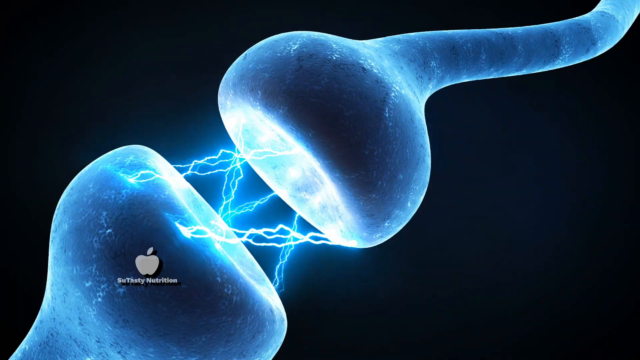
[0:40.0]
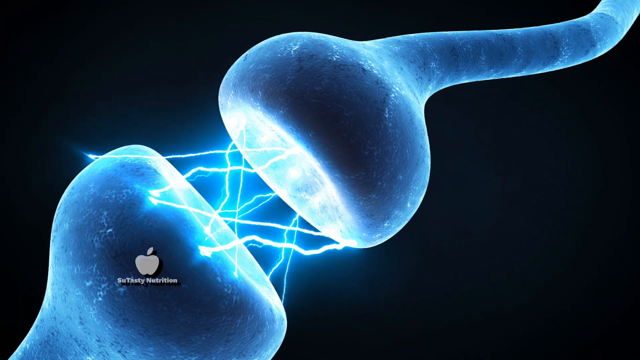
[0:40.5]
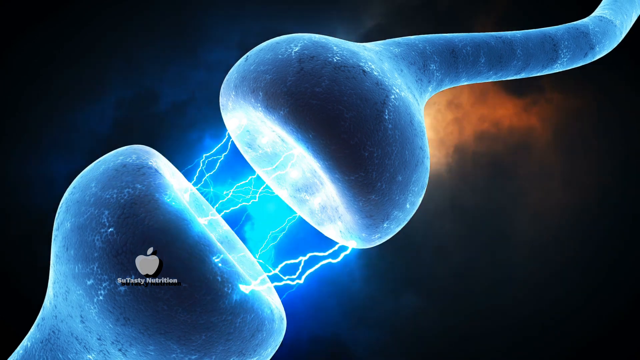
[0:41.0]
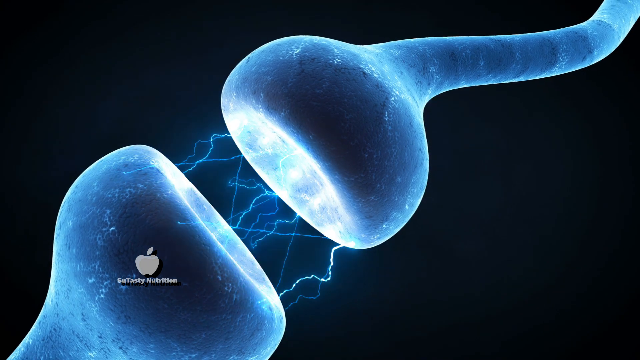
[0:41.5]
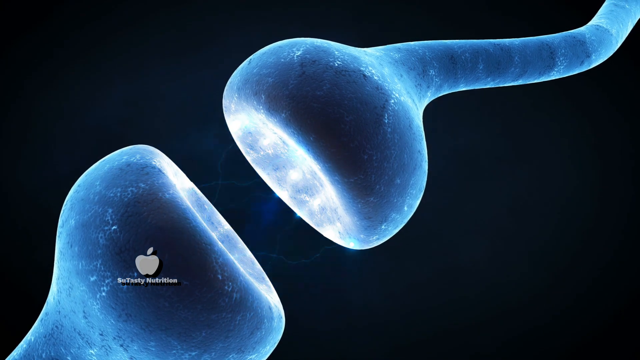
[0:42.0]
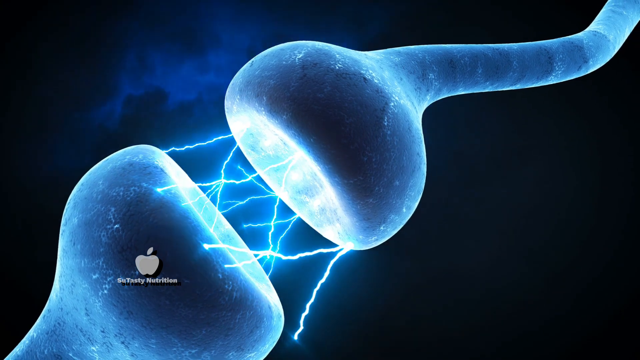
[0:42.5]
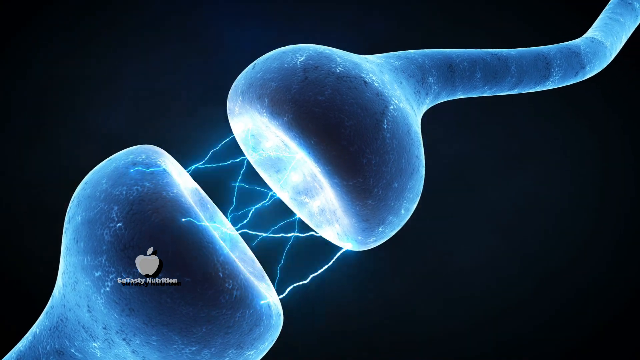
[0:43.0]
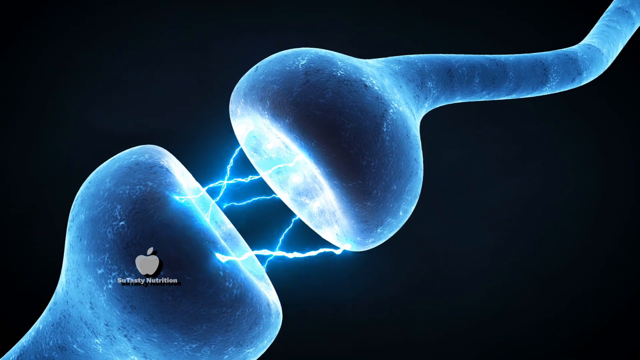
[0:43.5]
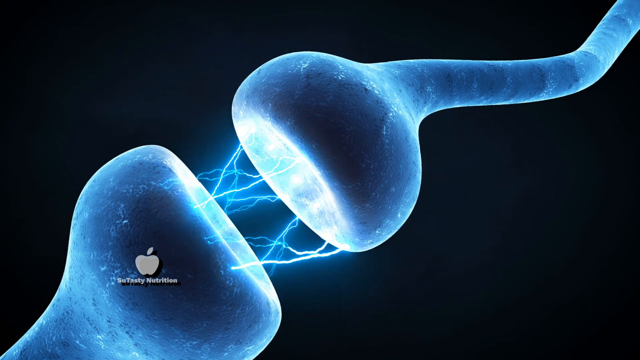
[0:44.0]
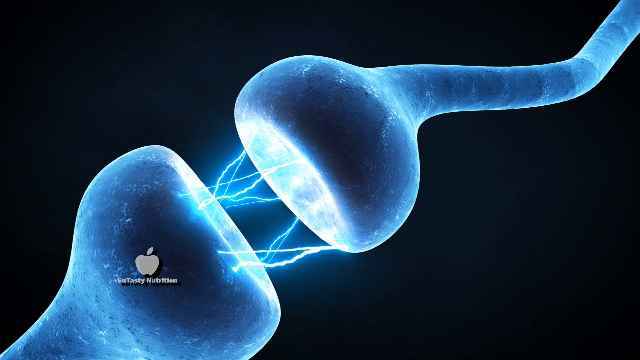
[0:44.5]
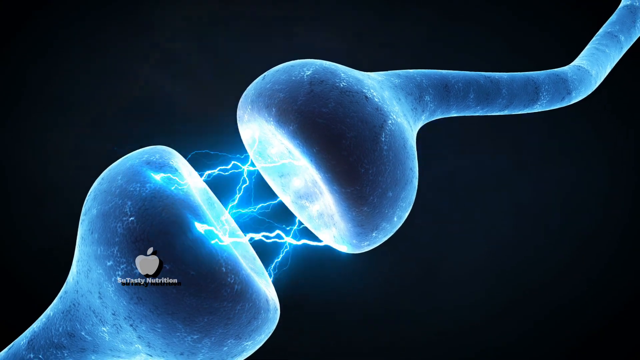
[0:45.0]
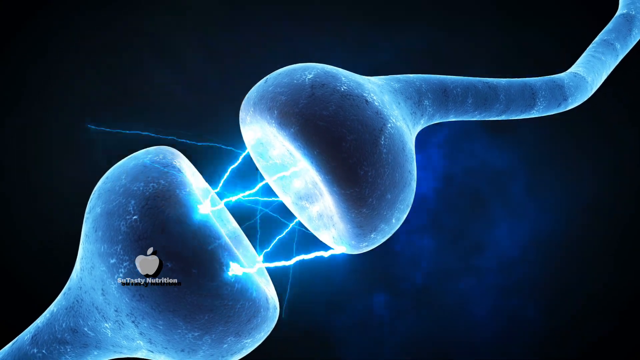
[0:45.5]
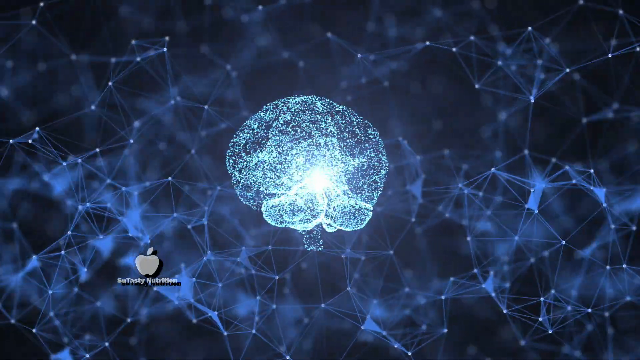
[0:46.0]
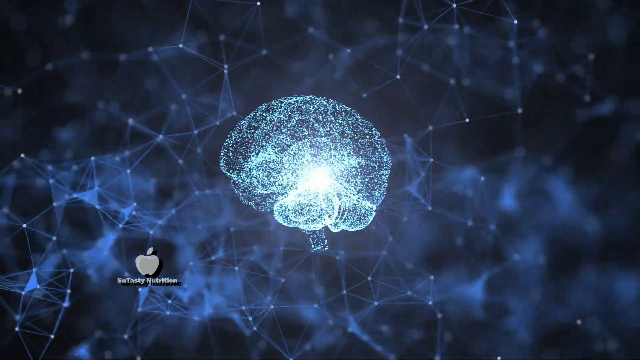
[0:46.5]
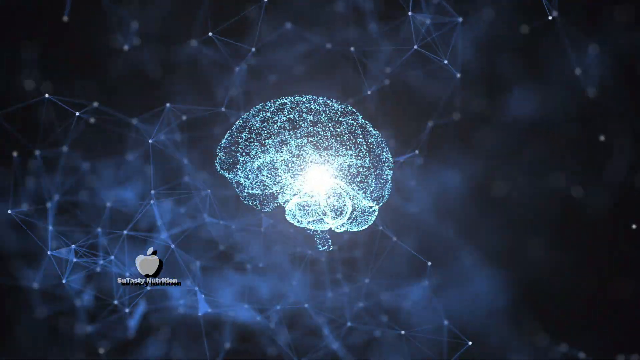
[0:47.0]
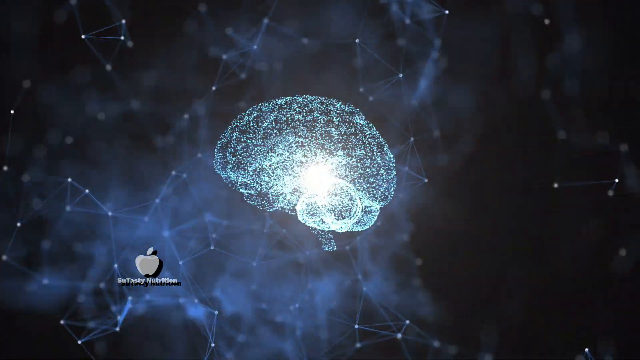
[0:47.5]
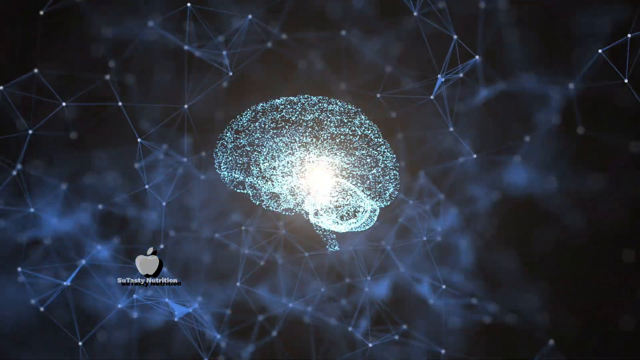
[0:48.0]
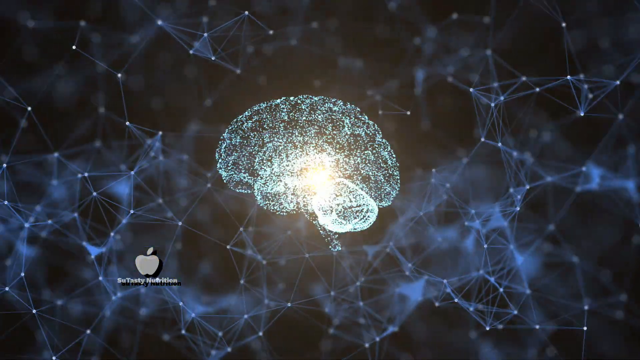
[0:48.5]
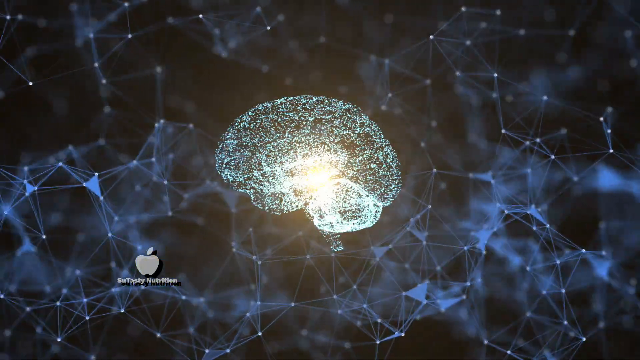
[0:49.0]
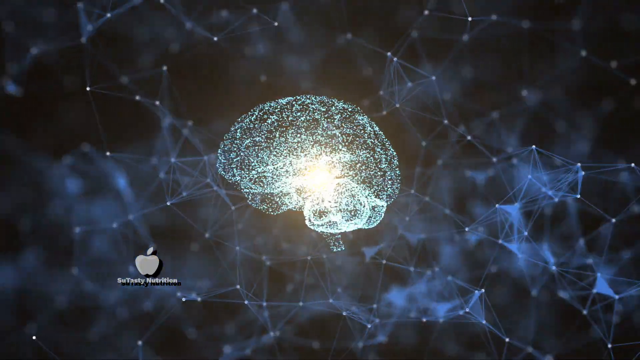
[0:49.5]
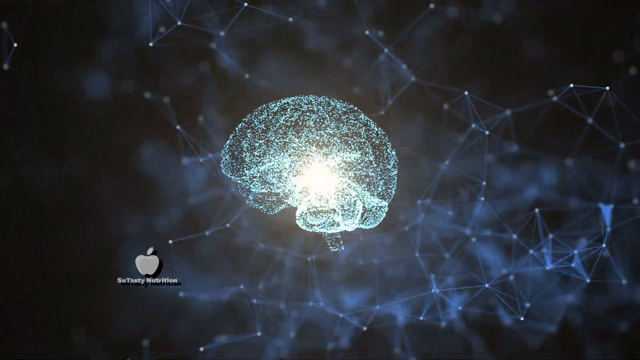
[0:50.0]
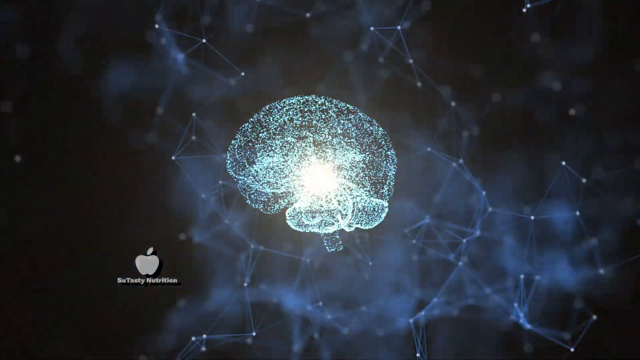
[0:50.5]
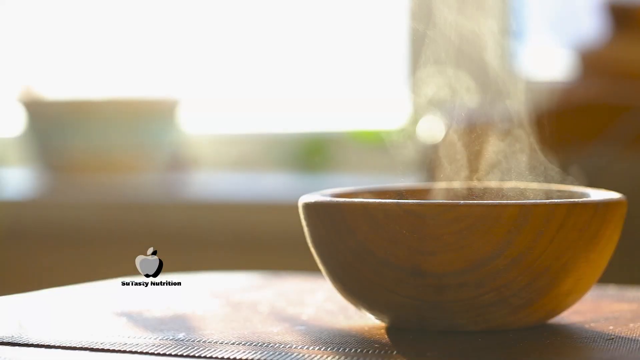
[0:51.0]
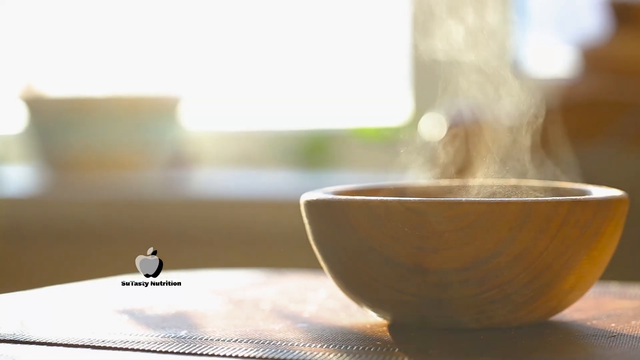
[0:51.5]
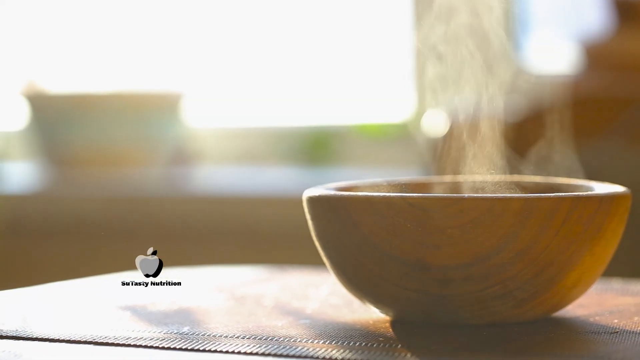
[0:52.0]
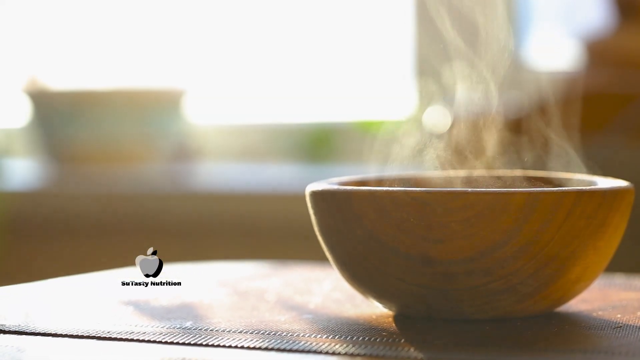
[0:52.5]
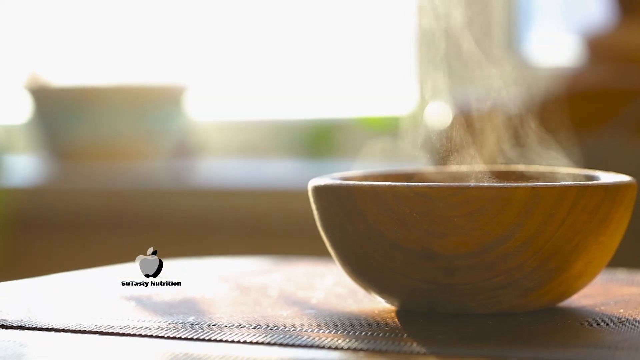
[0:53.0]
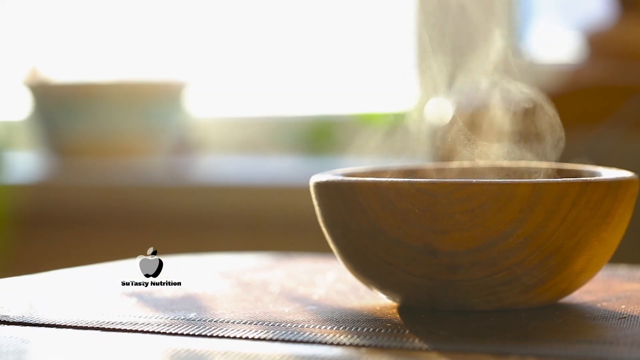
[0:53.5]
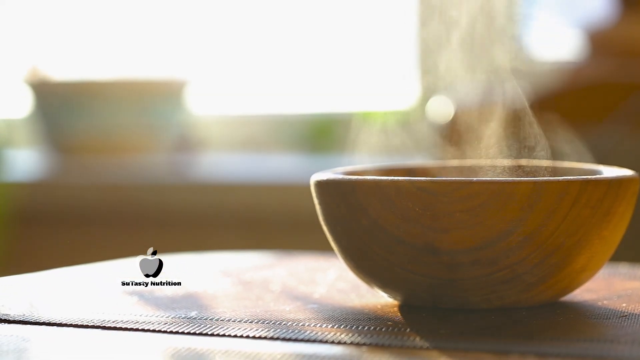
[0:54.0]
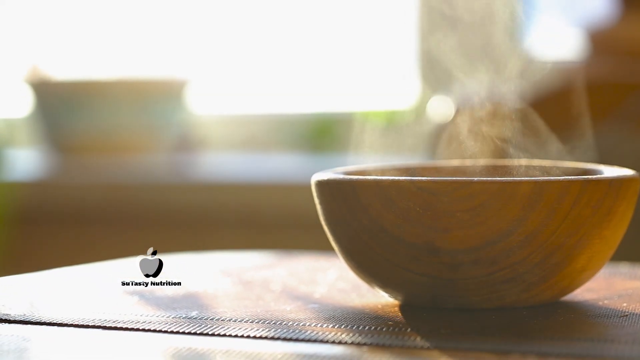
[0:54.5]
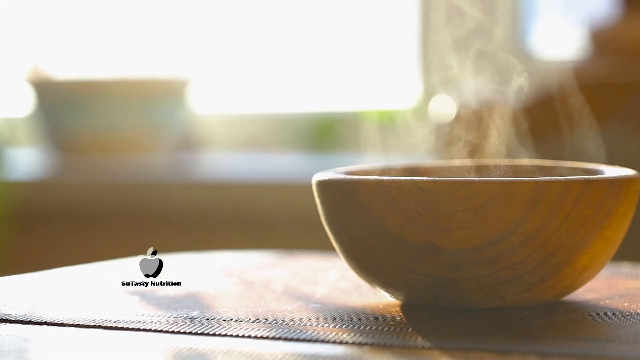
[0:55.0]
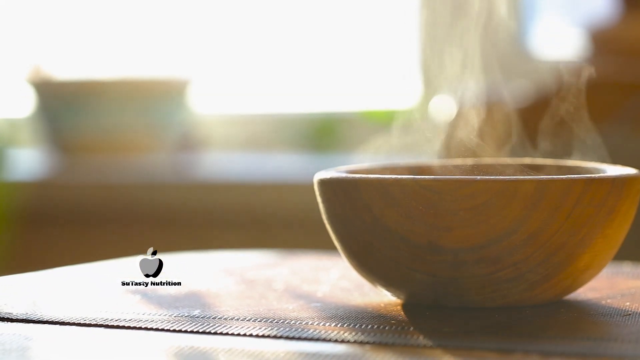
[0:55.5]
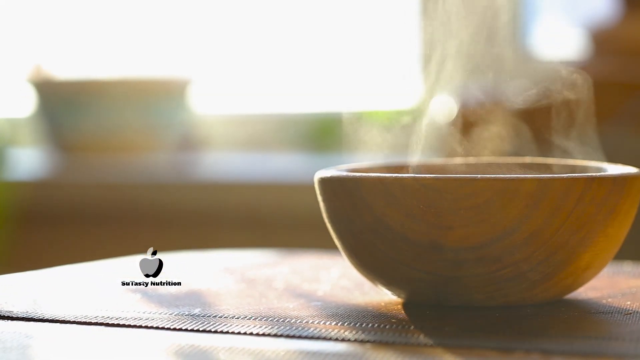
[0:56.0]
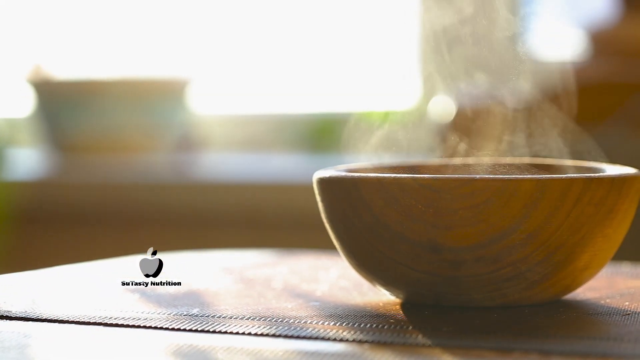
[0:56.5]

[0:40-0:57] Two blue illuminated objects, perhaps cells, face each other with a kind of staticky lightning passing between them, transferring between the two. A brain outline then appears against a black screen with many little points in the background that almost look like constellations, and the little brain rotates in a circle. The setting switches to a table with a wooden bowl on it, steam rising from the bowl. The video returns to the exchange of energy between the two cells. Also on the screen with the bowl is an apple emblem, almost like the Apple iPhone emblem. Light comes into the room from a window in the background, and steam comes out of the bowl.